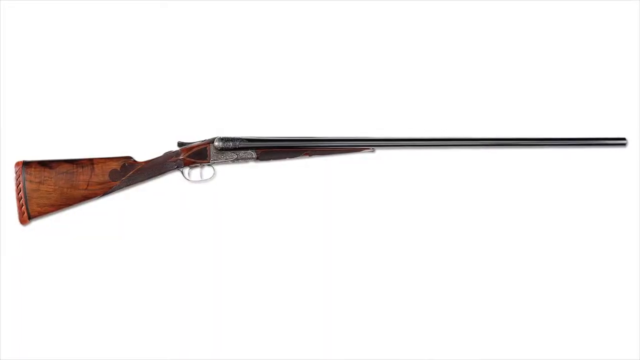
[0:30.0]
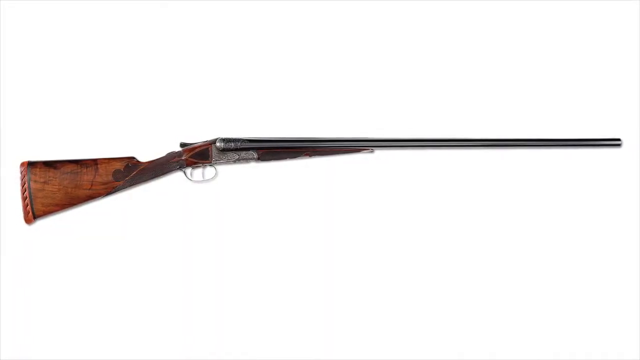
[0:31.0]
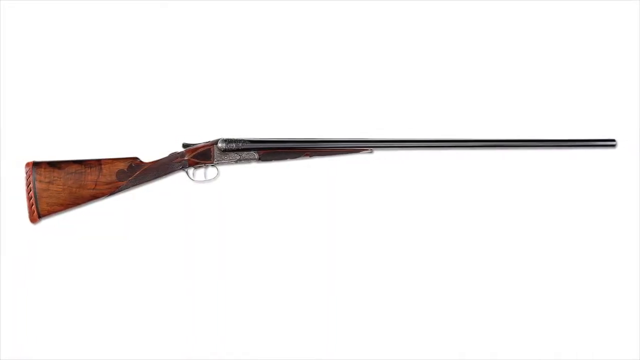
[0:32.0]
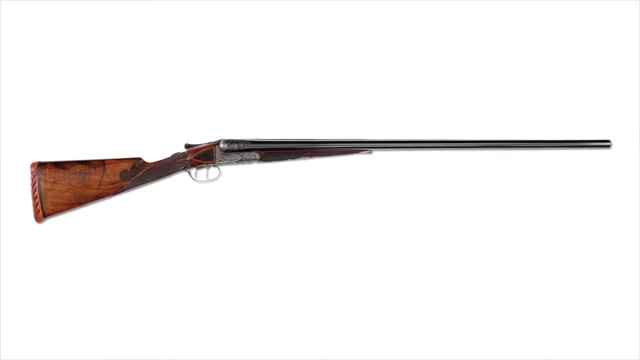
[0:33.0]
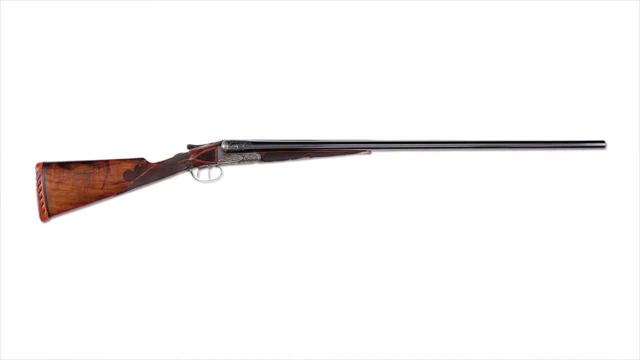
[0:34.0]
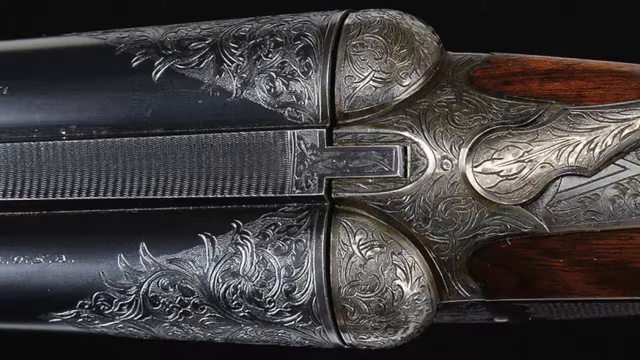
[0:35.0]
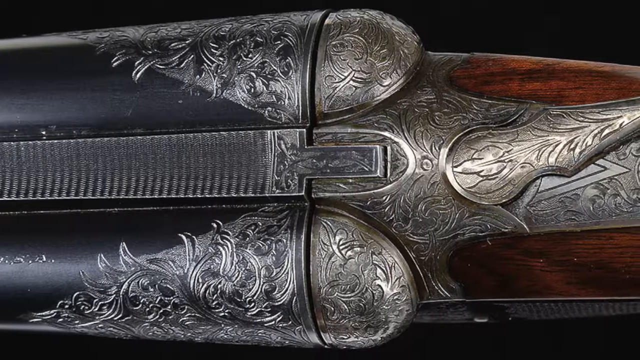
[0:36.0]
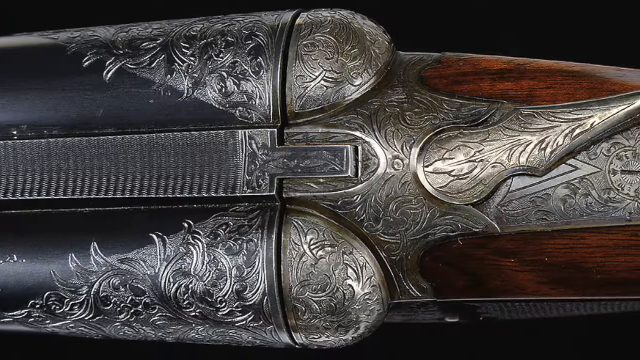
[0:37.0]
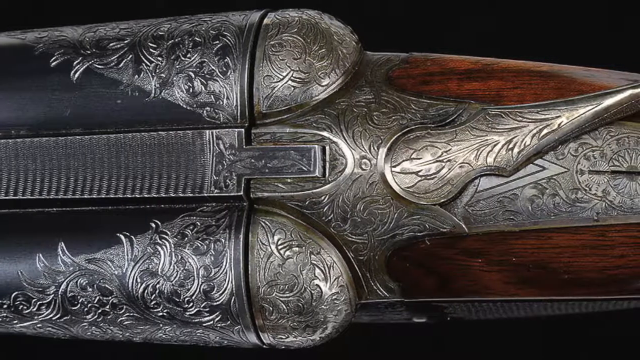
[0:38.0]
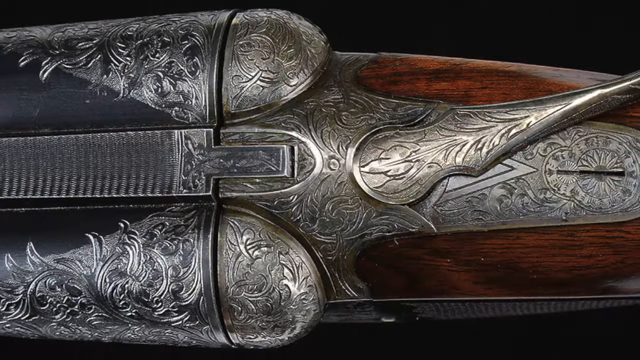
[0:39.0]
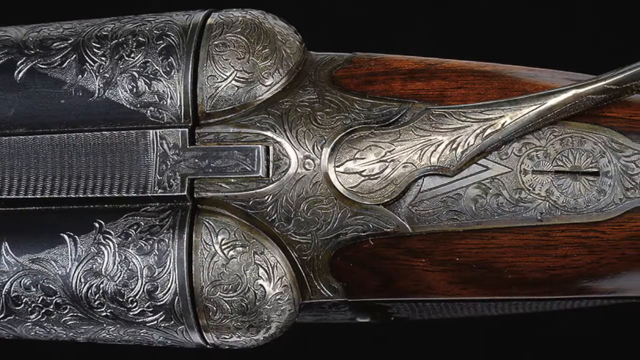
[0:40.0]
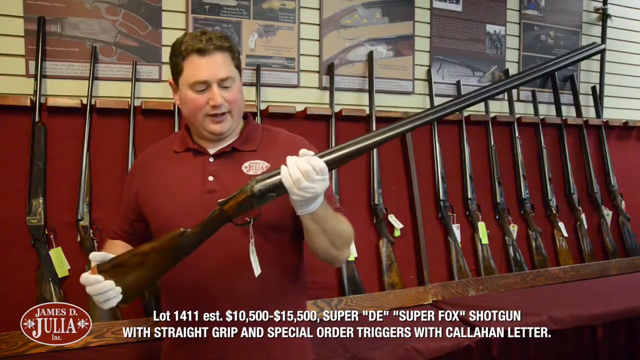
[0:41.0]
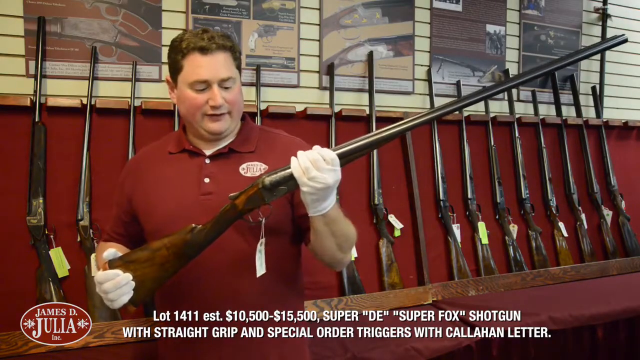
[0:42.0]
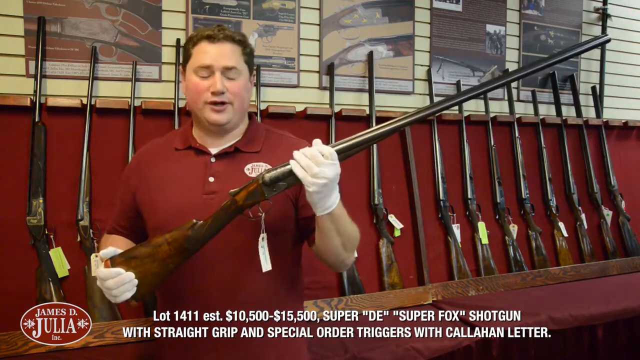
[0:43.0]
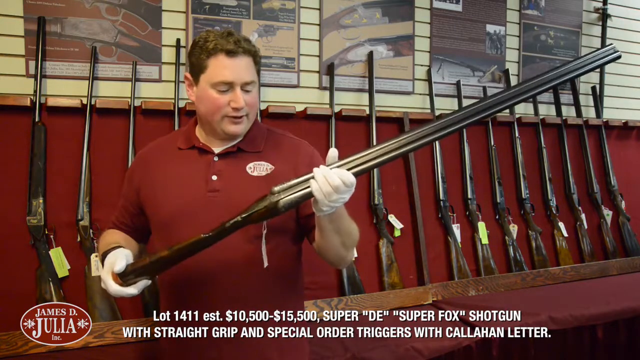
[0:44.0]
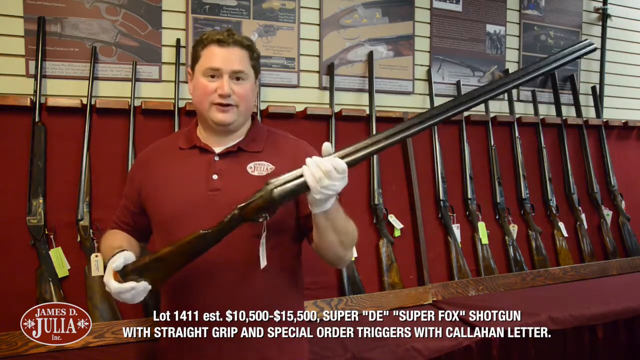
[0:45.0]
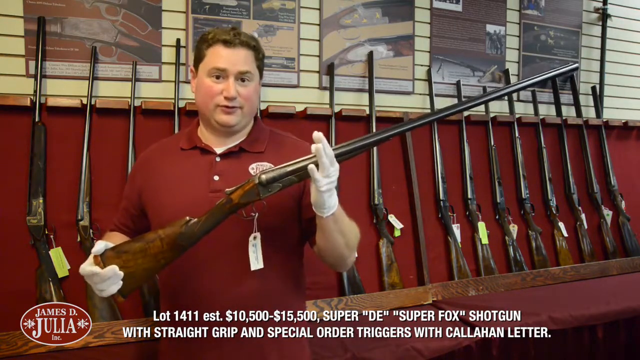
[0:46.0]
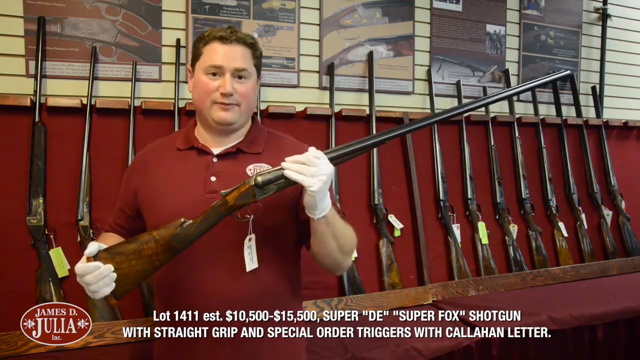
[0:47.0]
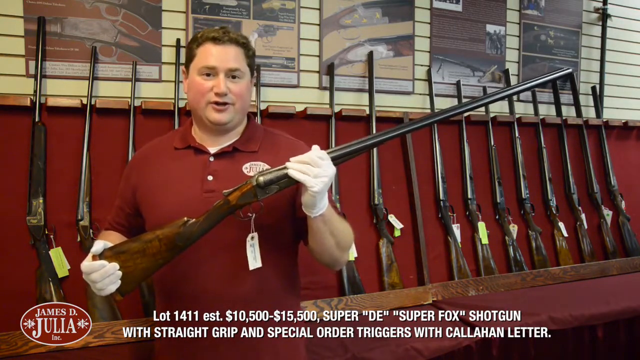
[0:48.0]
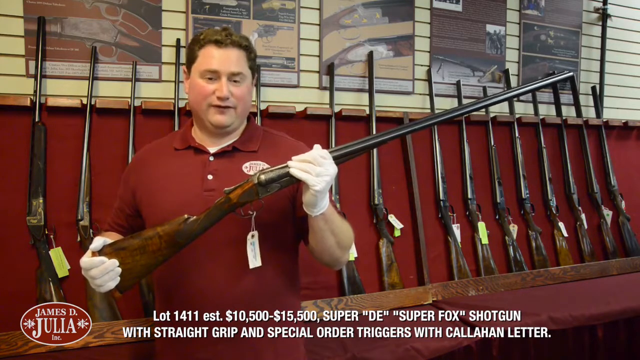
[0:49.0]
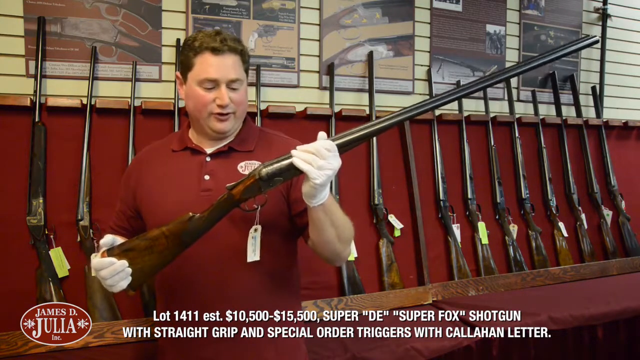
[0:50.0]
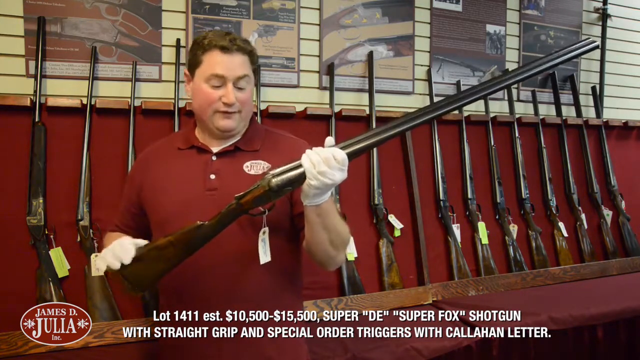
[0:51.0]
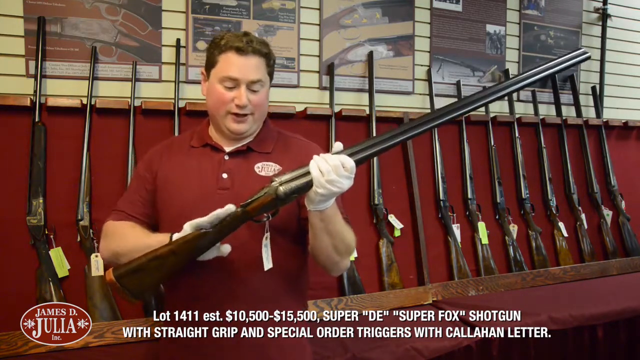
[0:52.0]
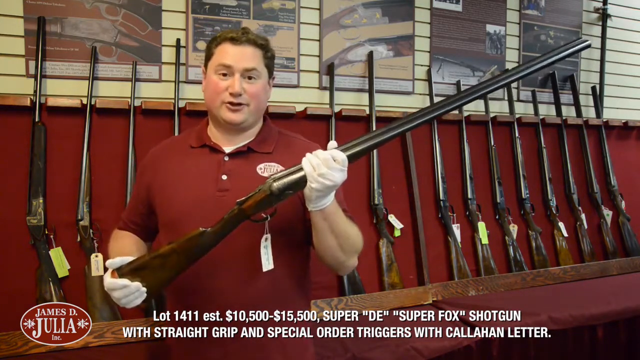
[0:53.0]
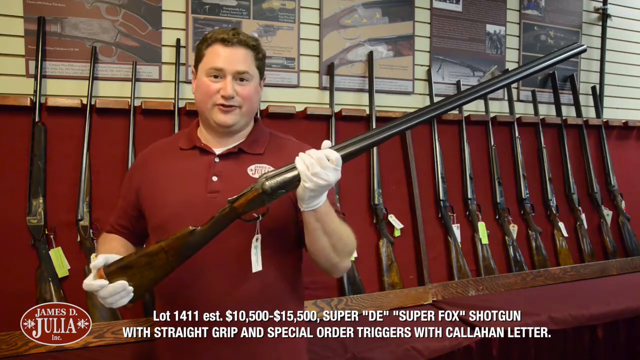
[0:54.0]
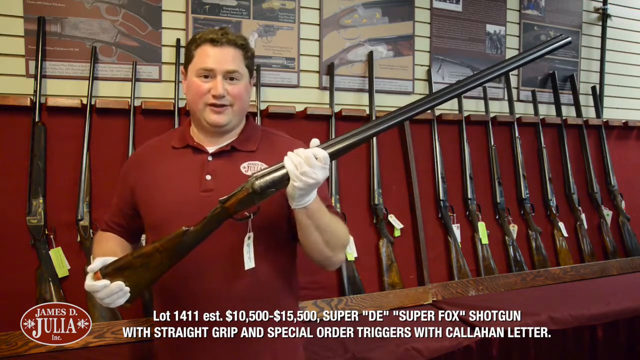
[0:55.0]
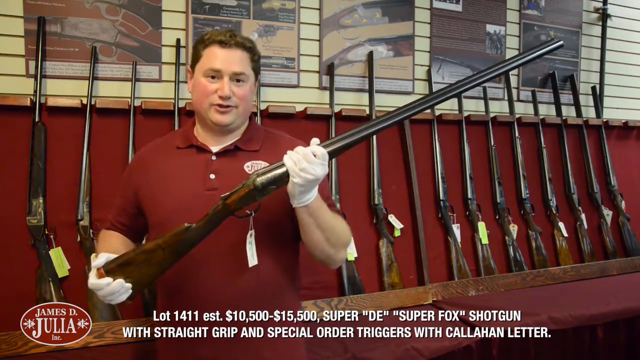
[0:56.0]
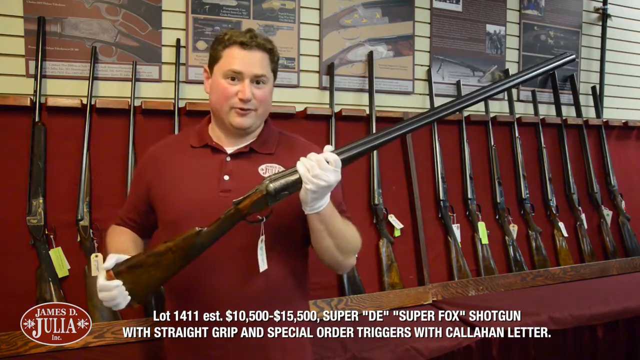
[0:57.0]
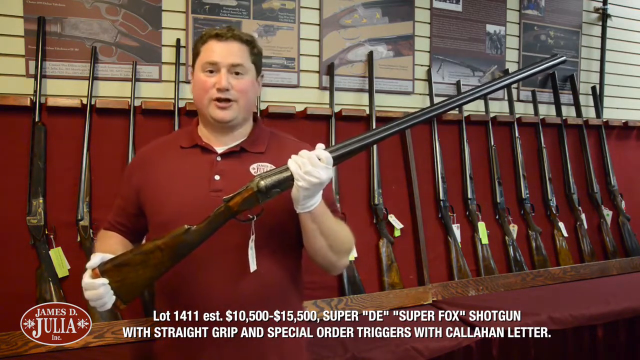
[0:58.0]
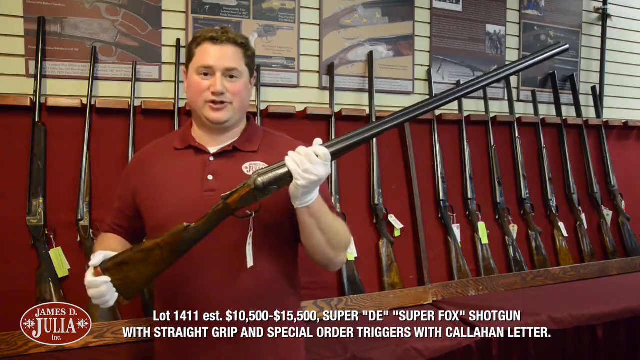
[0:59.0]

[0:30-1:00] An image shows a long-barreled rifle on a white background; the back of the rifle is made of wood. The image kind of zooms out as the rifle gets smaller, and then a zoomed-in photo shows the top view of the rifle, mainly the base of the barrel. The metal has kind of a swirling detail, along with what looks like a T in the center of the barrel. The camera pans toward the right, showing more of the gun. The video then cuts back to the man inside the rifle shop, still holding the long-barreled rifle on its side in both hands. He looks down at the side of the rifle, likely discussing details about it, then looks up directly into the camera with kind of a matter-of-fact look on his face. He looks down at the rifle again, kind of moves it on its side in both hands, and continues discussing it. He moves it back into the correct position in his hands and then seems to open both hands as if to emphasize what he is saying.